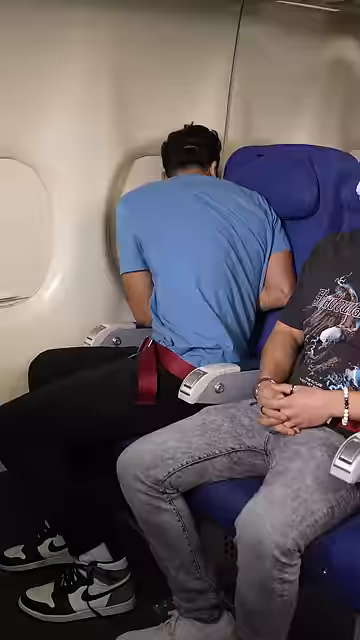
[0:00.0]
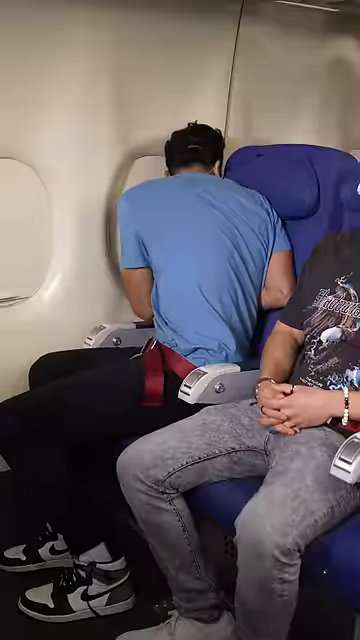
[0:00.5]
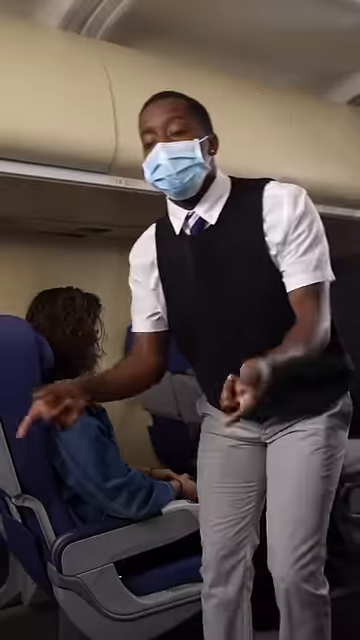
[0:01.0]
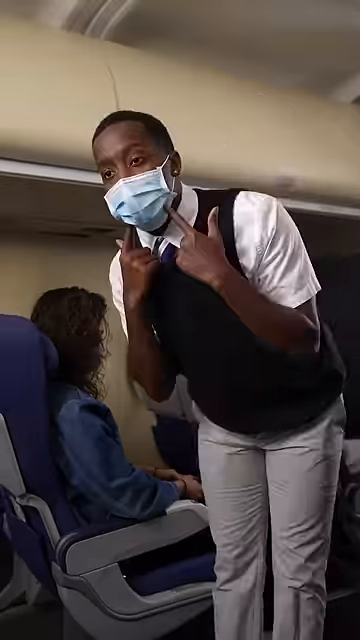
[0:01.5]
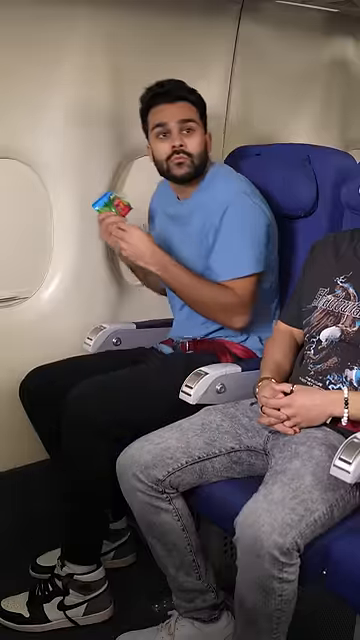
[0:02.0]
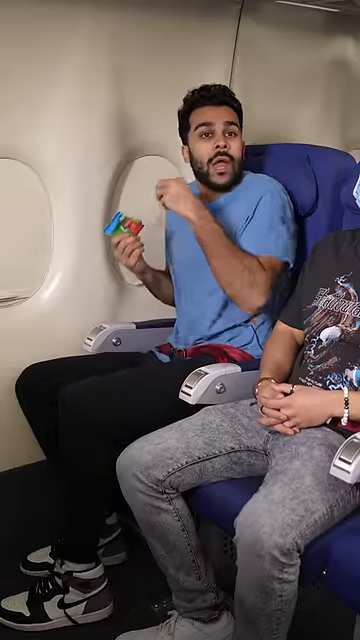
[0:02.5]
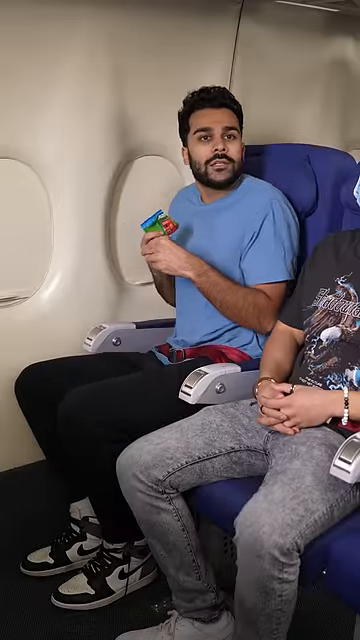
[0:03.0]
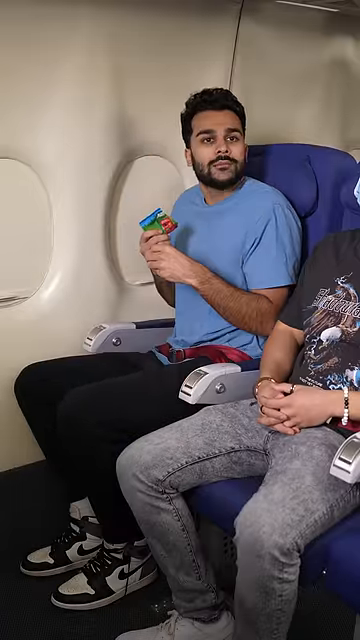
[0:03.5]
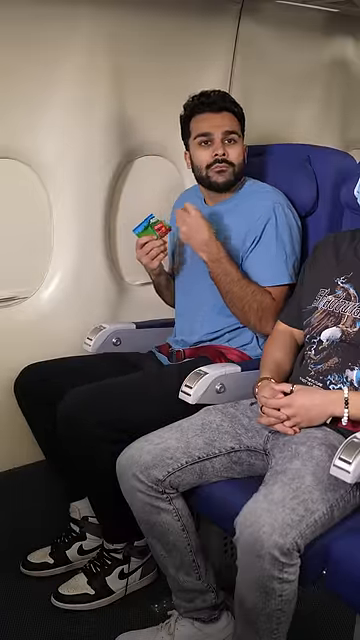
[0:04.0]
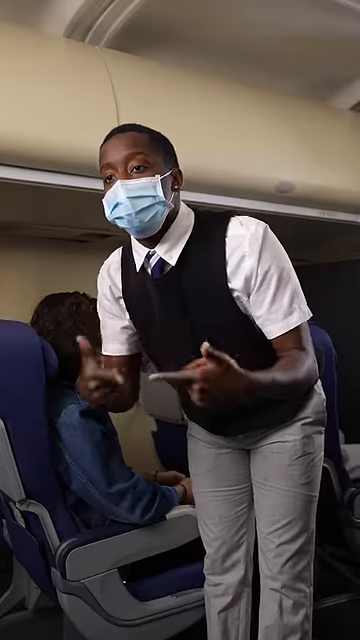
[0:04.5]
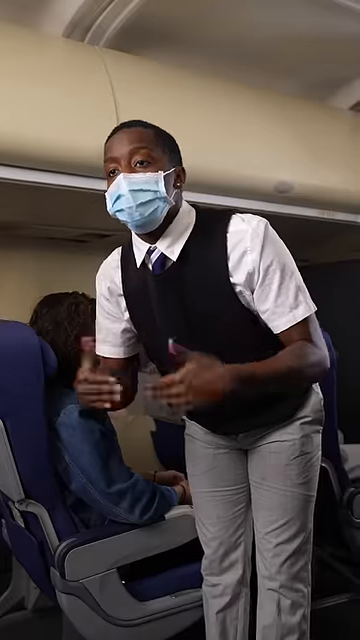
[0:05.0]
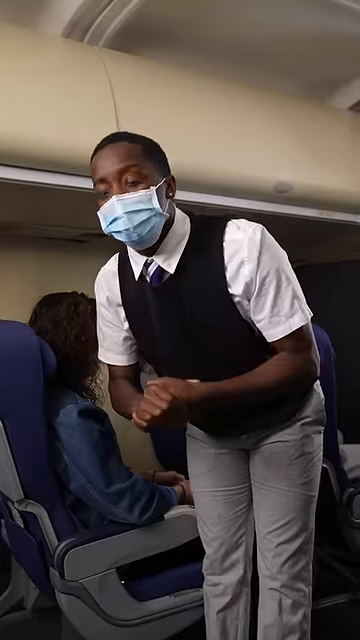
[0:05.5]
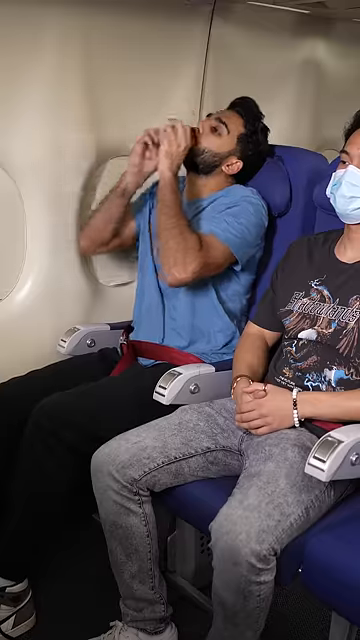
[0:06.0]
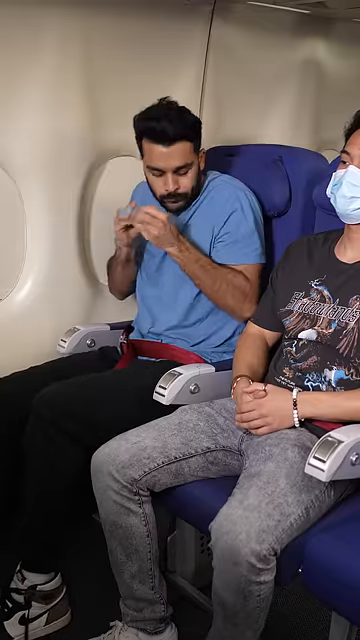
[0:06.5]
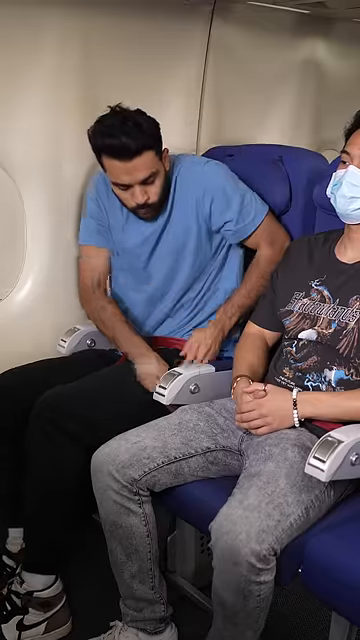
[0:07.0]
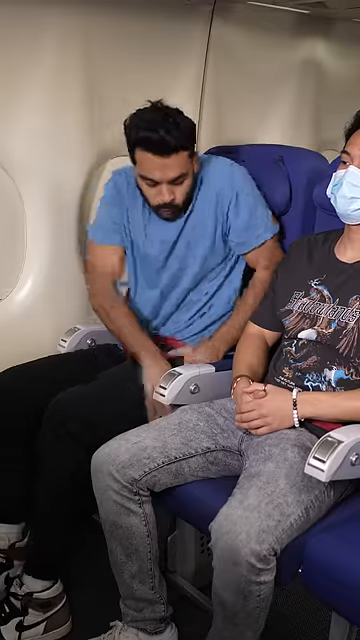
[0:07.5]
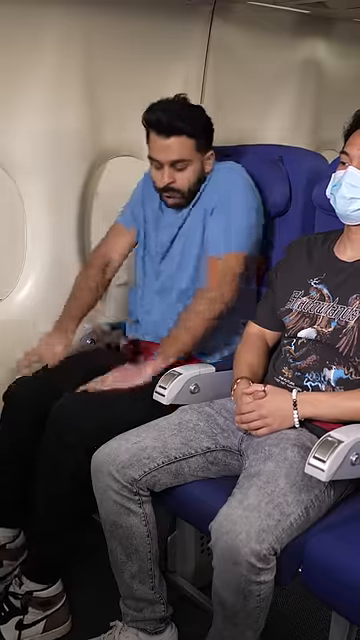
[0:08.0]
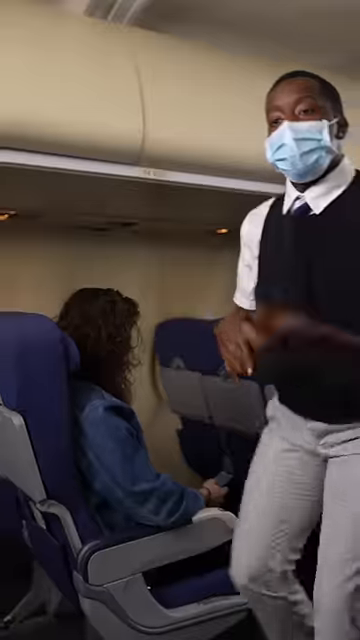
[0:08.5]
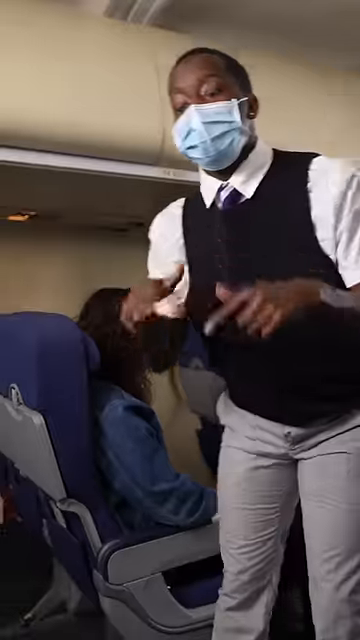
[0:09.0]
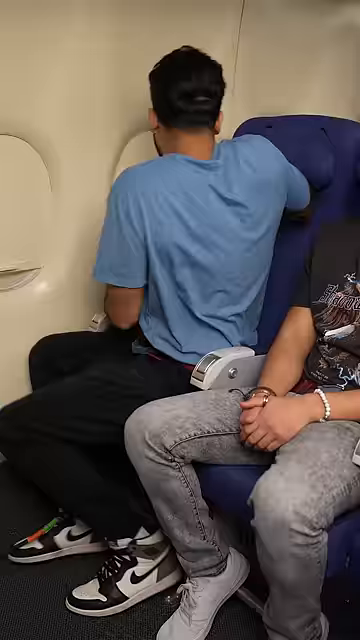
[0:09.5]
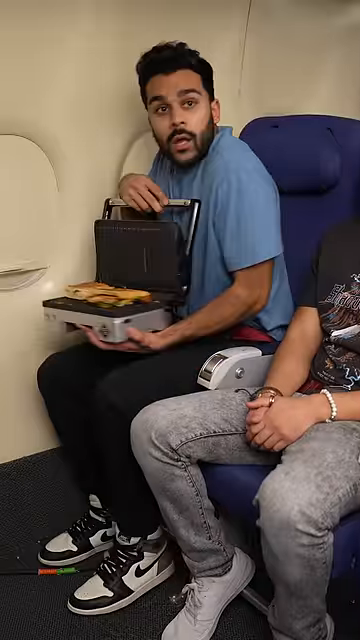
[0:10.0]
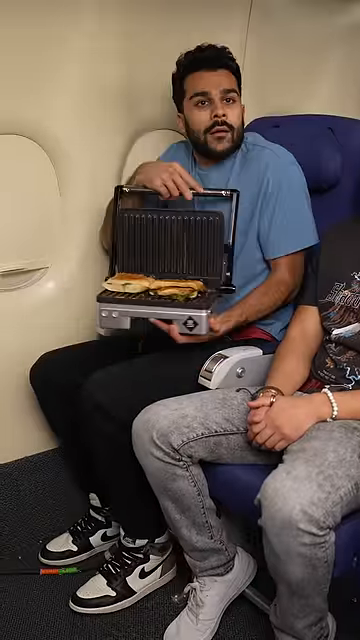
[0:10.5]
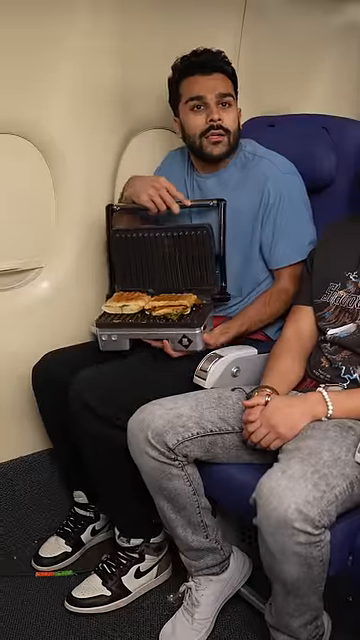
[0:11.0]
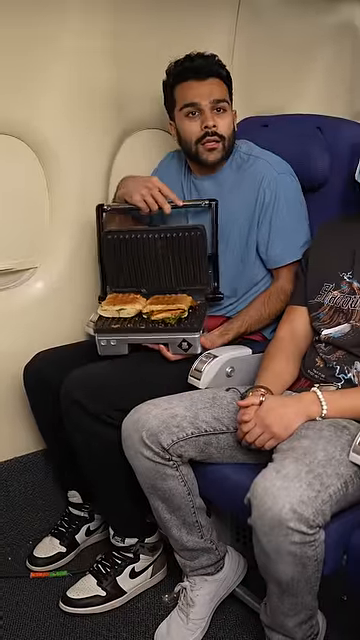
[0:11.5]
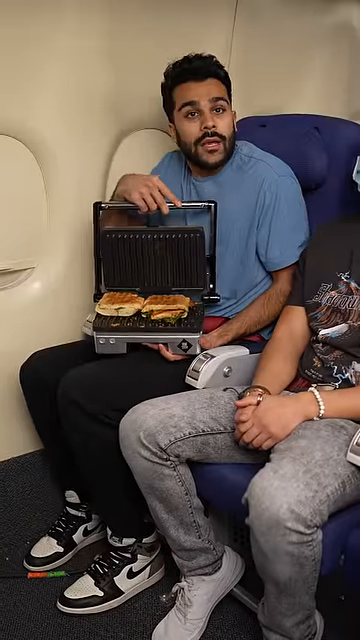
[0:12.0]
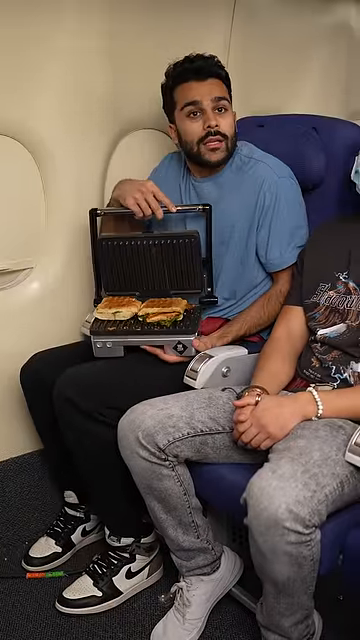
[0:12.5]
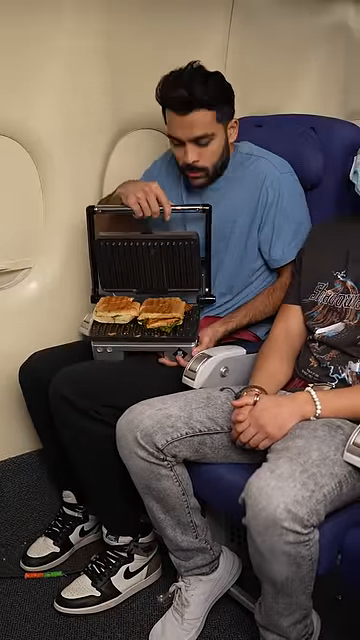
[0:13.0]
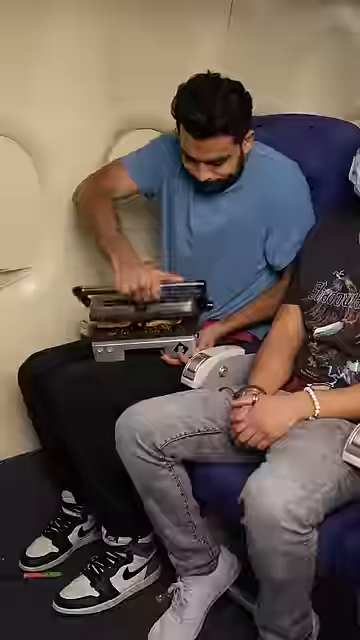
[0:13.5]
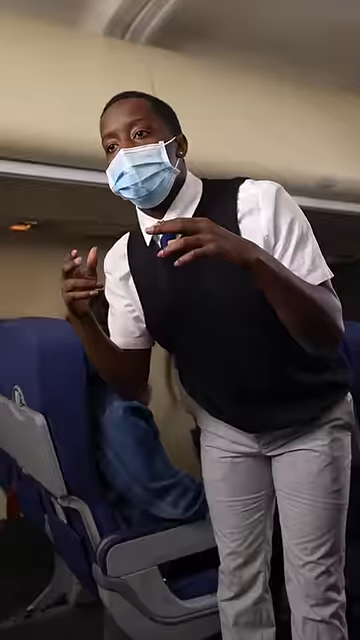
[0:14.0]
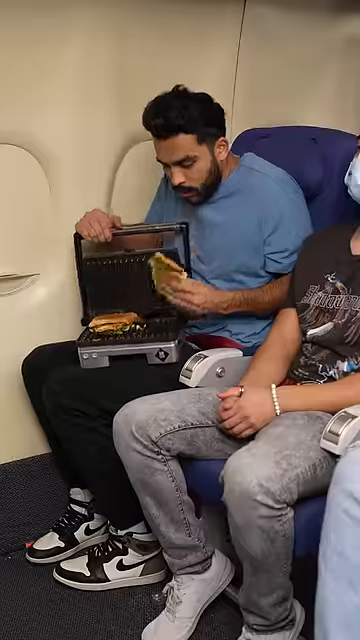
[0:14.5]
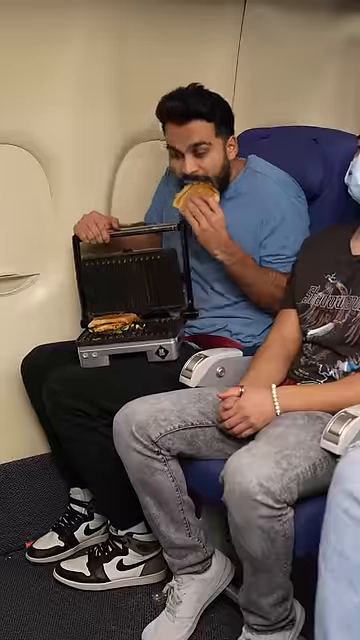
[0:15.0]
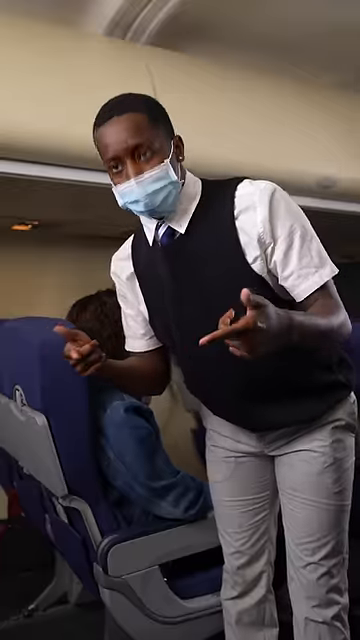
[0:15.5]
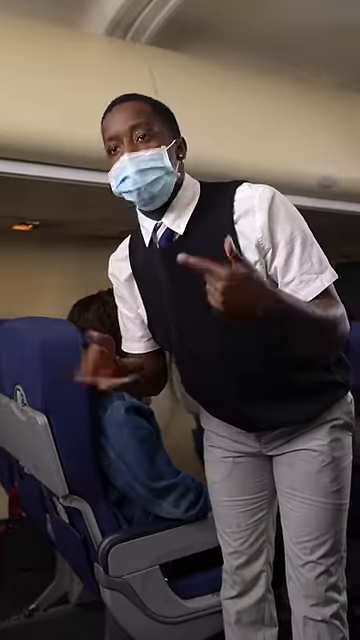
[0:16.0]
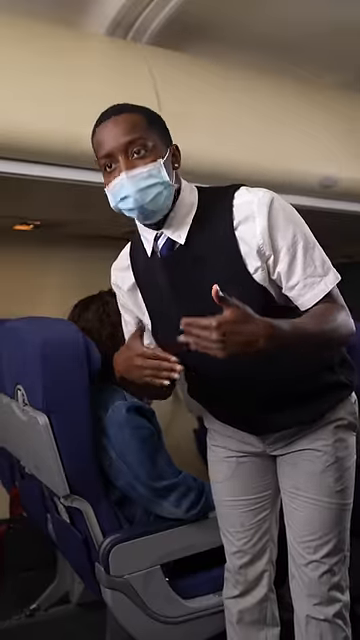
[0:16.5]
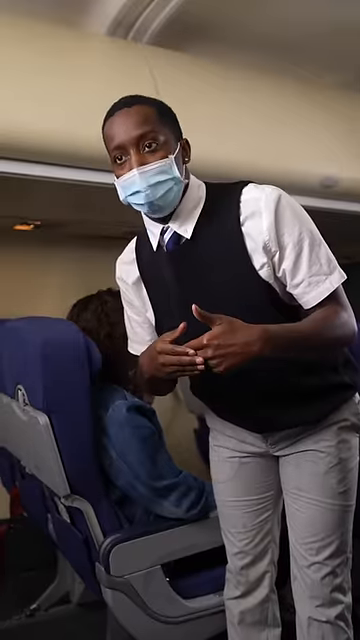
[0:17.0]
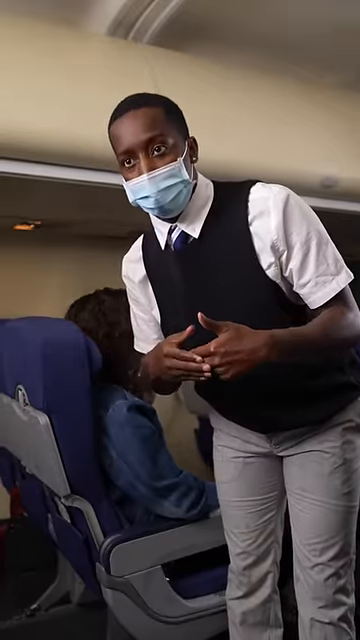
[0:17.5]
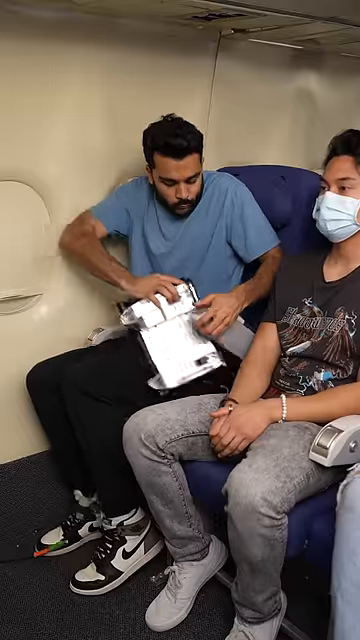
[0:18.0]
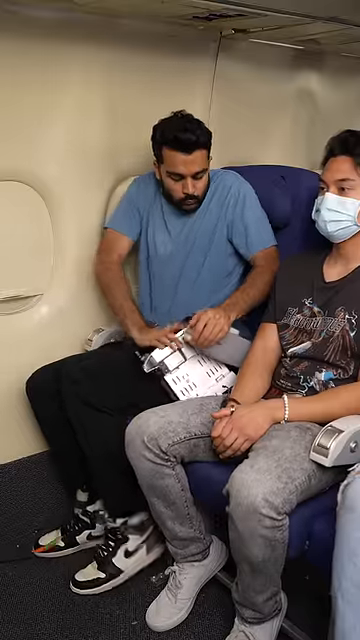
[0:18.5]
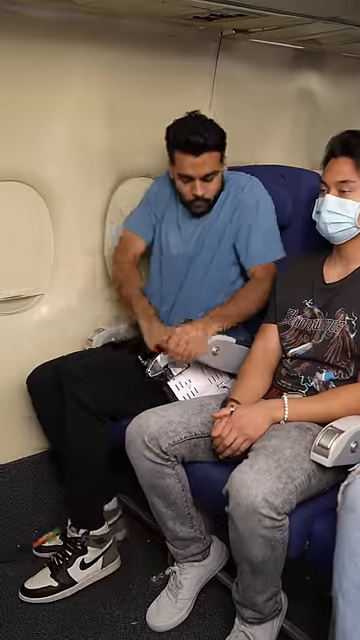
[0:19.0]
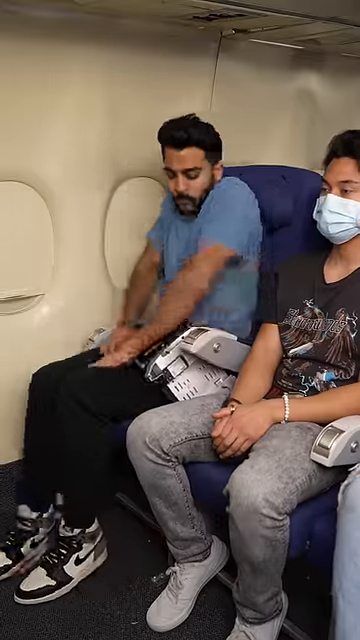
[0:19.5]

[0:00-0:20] On a passenger airplane, in what appears to be a comedy, a flight attendant wearing a medical mask approaches a passenger and gestures by rolling their hands around each other, as if to get the person moving. The passenger has his back turned at first, then spins around. He is a man in a blue t-shirt with a full beard, Nike sneakers and what looks like black pants; the passenger next to him wears gray pants and a black t-shirt. Startled, the man turns around holding a bag of candy, or possibly nuts, from the plane, throws them down his throat and wipes off his pants. He then reaches back and pulls out a griddle, as if he were cooking burgers, opens it to reveal what looks like some sort of grilled sandwiches, and presses it down.